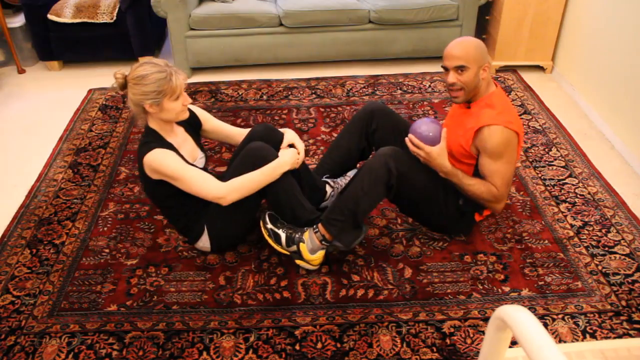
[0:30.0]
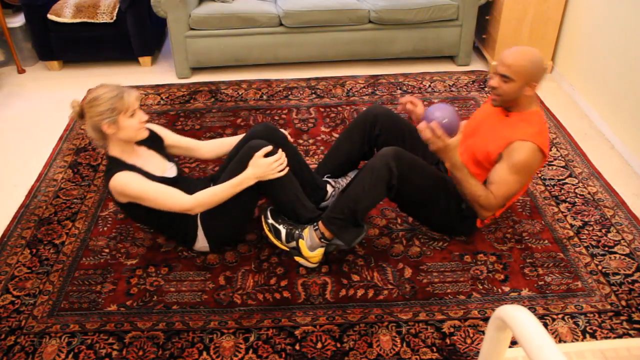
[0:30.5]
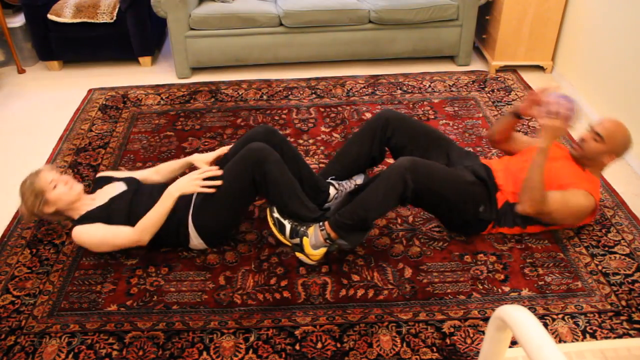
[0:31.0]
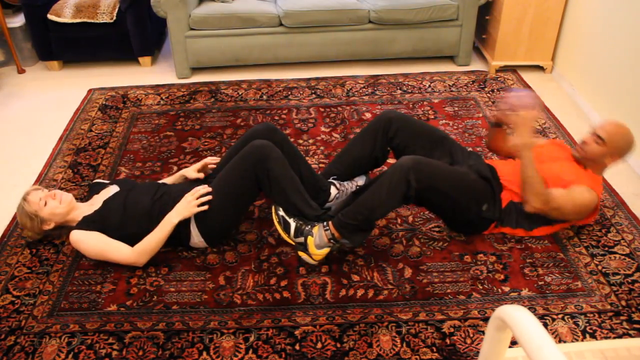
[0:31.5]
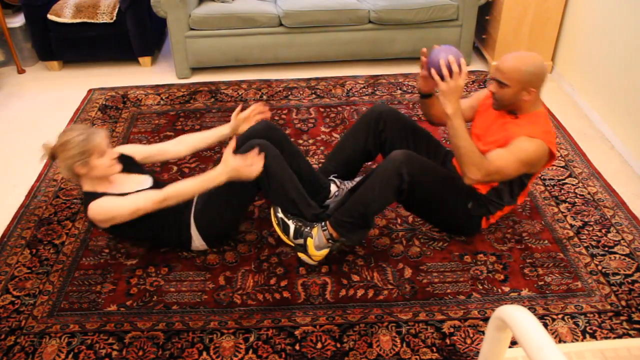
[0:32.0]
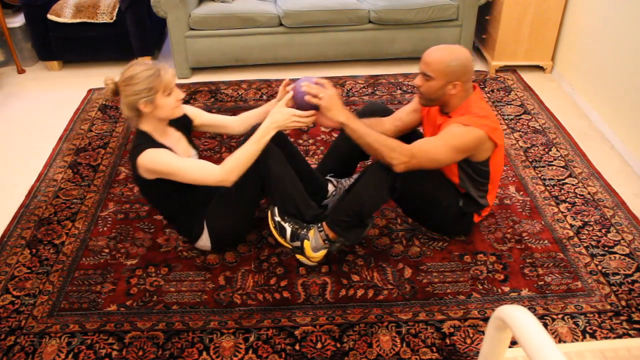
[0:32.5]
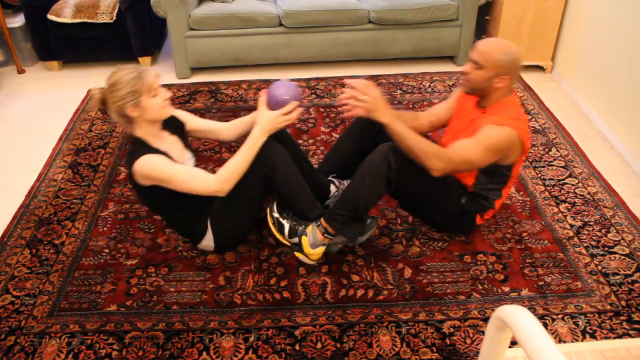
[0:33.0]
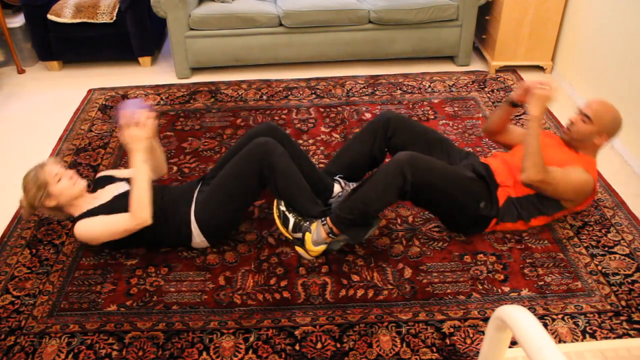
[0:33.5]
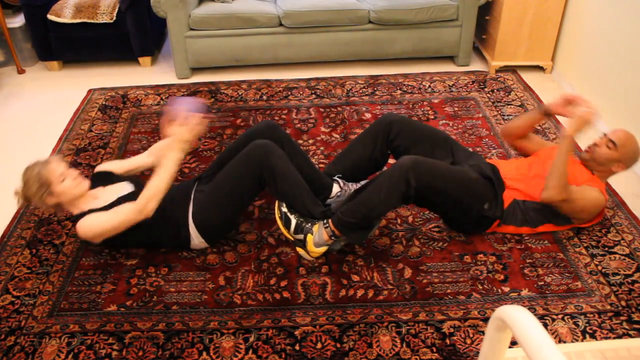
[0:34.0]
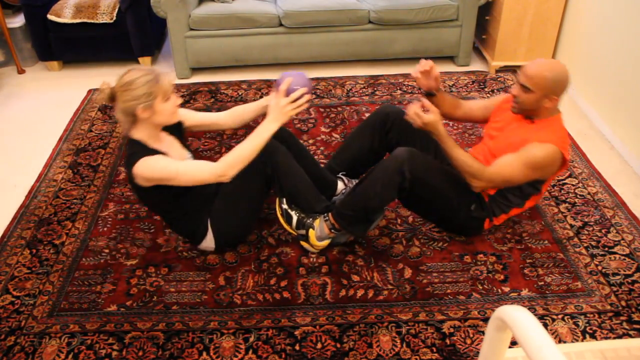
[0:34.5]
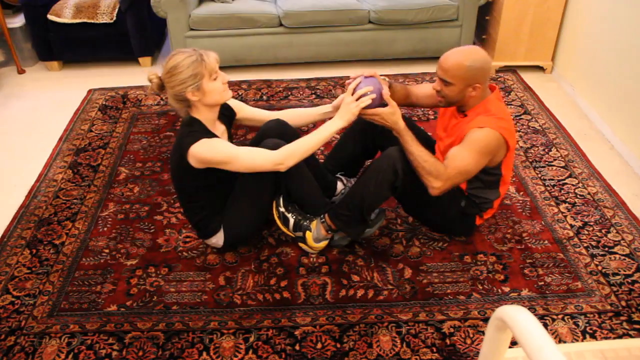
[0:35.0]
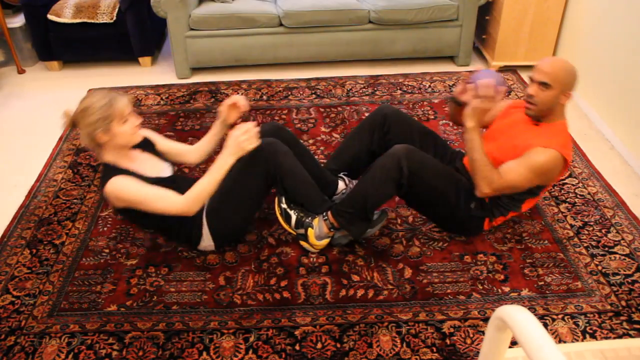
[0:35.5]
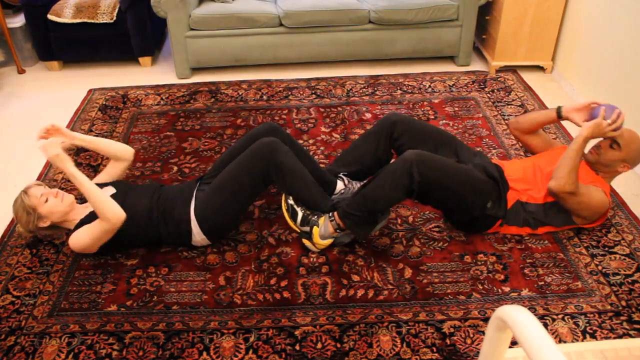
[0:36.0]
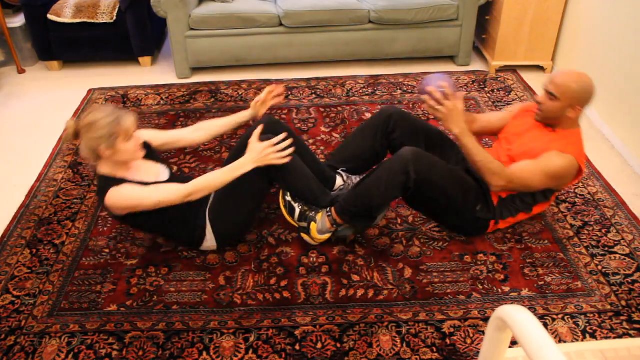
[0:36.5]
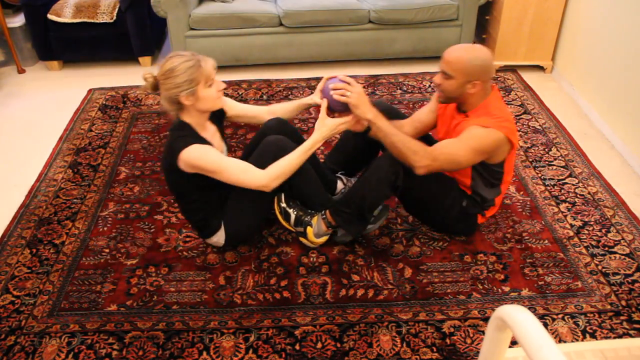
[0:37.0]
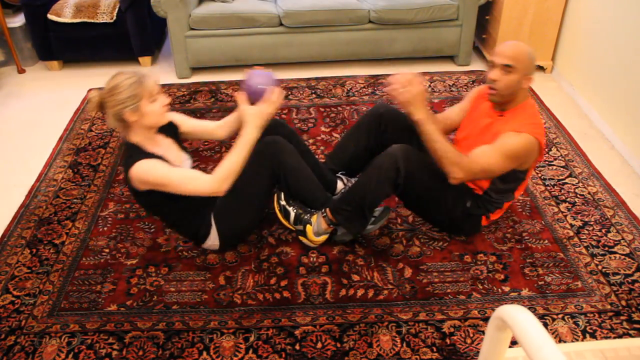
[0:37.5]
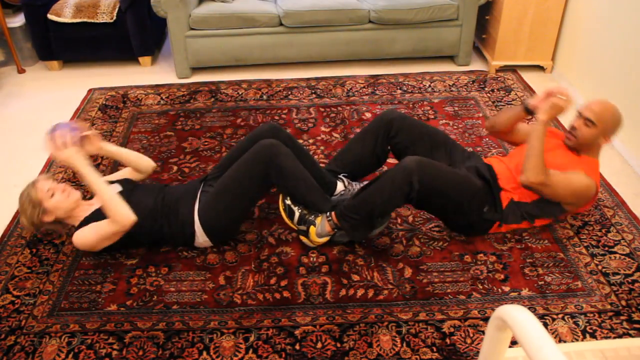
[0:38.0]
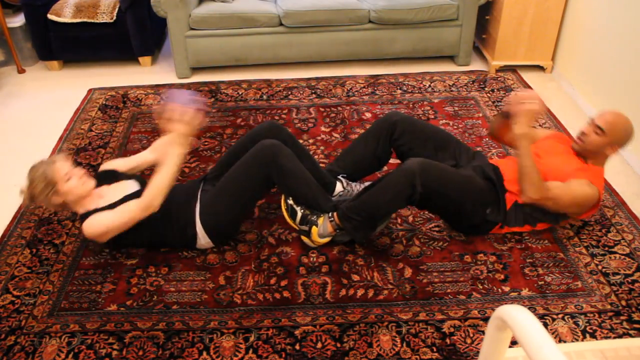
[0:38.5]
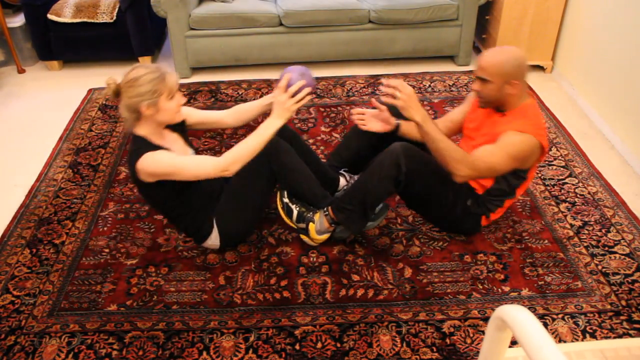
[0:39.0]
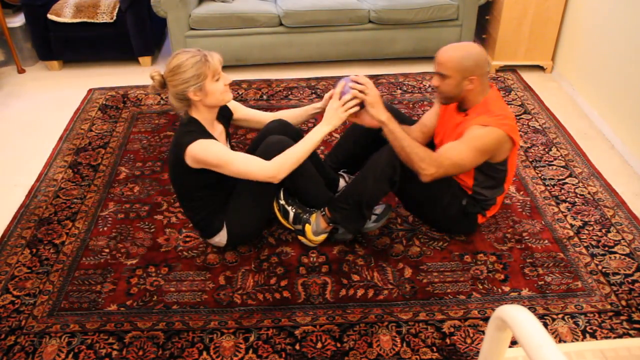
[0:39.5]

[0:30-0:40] A man and a woman sit face to face. The woman holds his two legs with her hand, and the man holds a bagel. The exercise apparently involves them lying down and passing the ball to each other one by one.